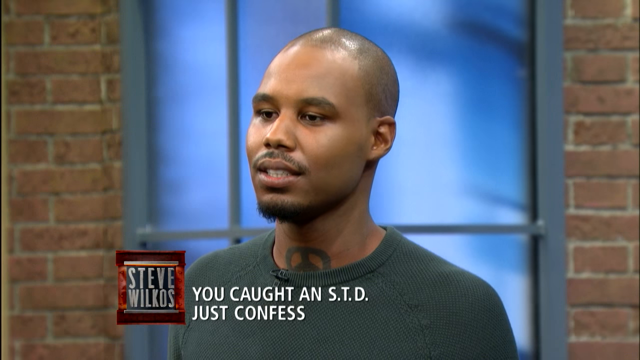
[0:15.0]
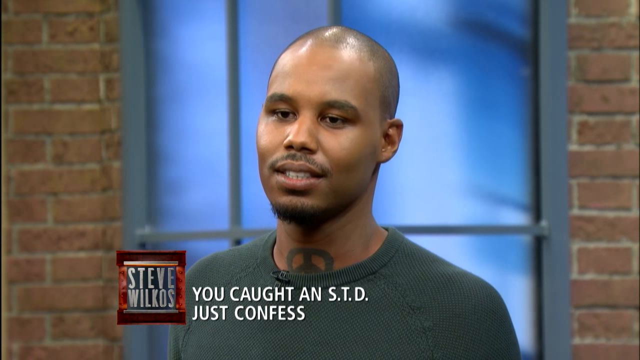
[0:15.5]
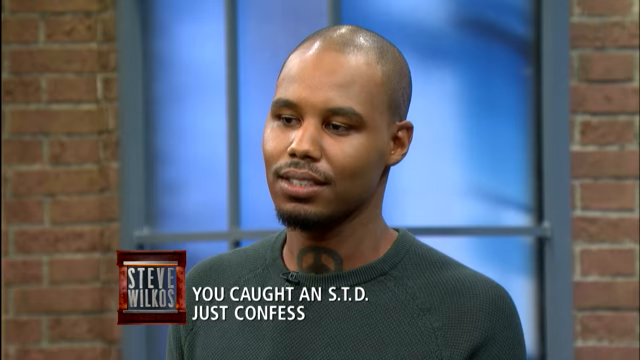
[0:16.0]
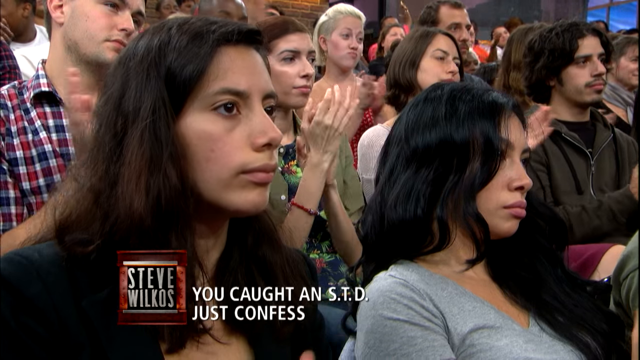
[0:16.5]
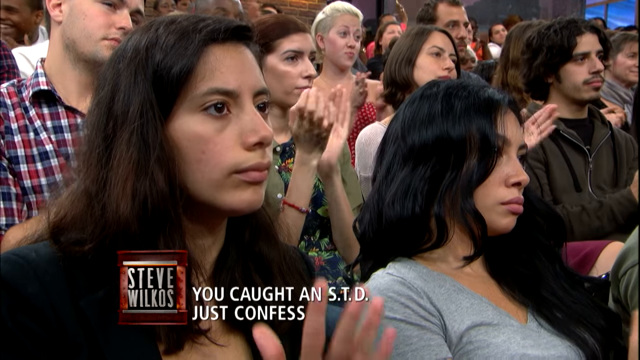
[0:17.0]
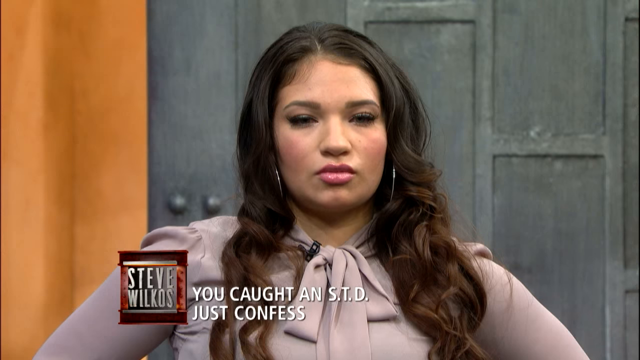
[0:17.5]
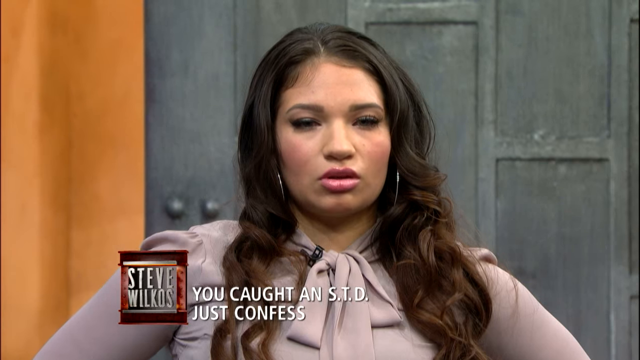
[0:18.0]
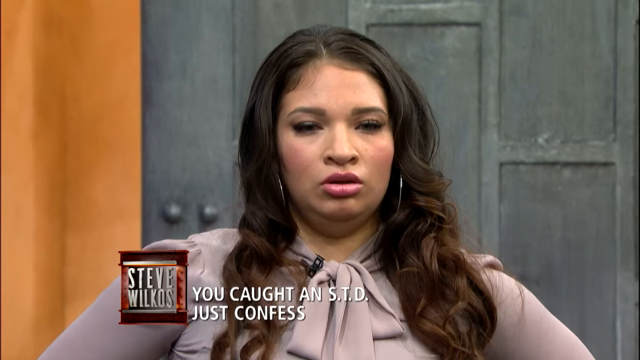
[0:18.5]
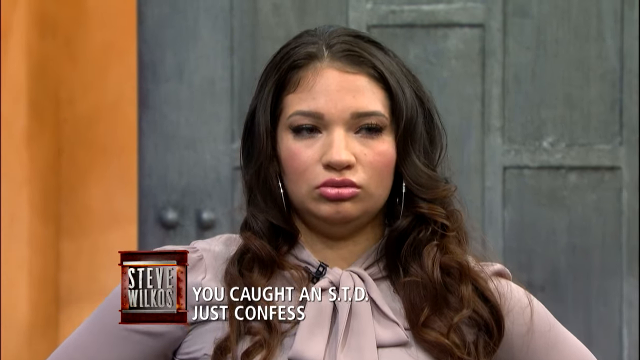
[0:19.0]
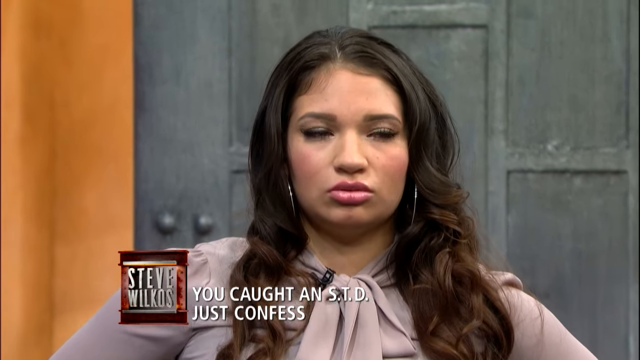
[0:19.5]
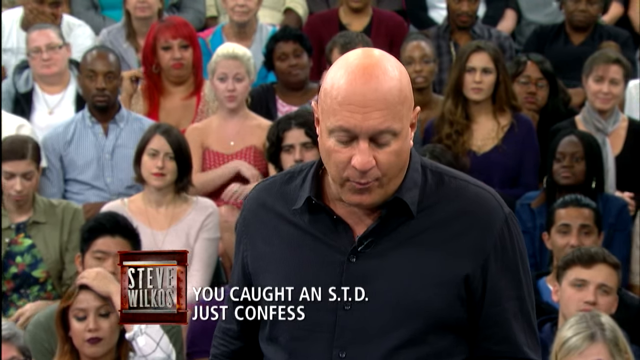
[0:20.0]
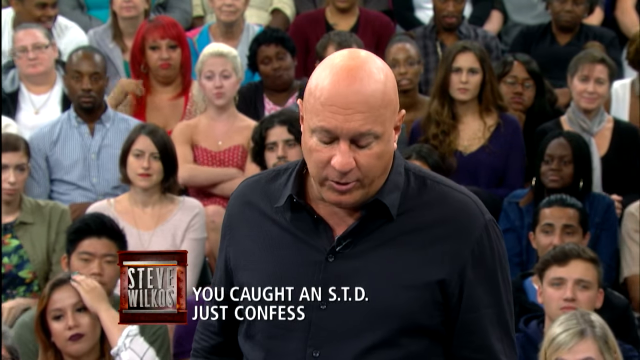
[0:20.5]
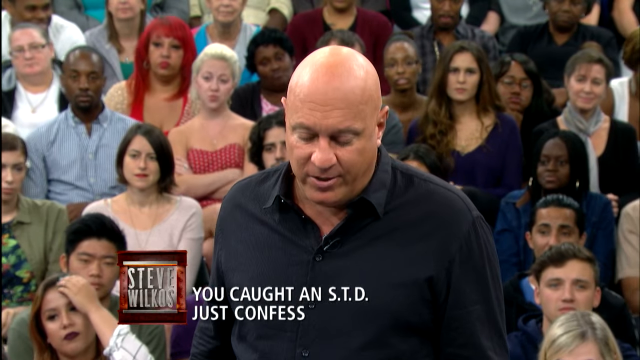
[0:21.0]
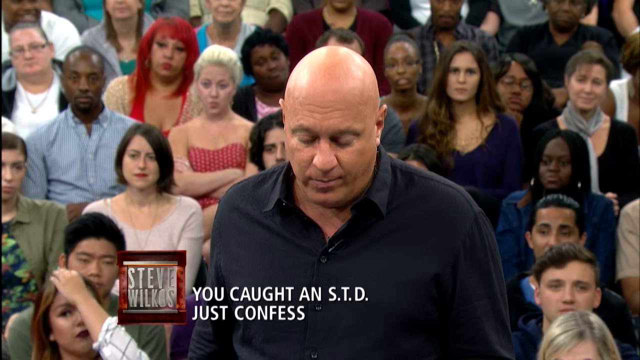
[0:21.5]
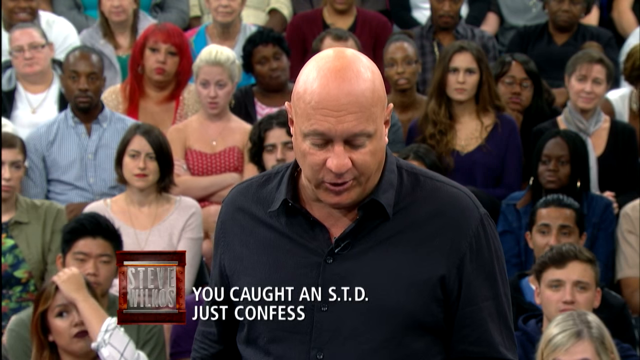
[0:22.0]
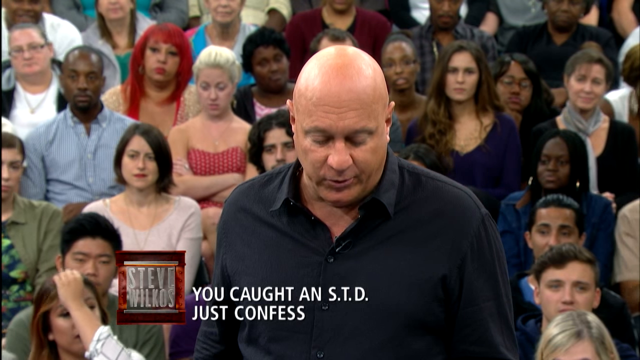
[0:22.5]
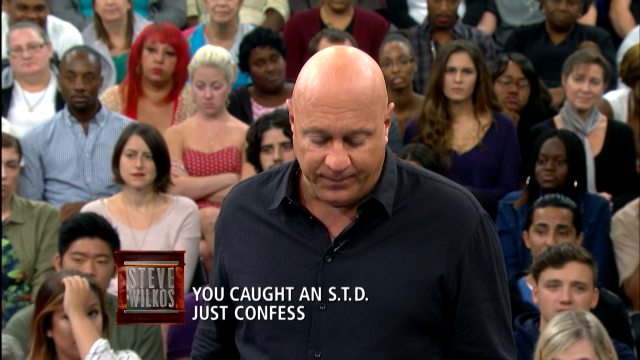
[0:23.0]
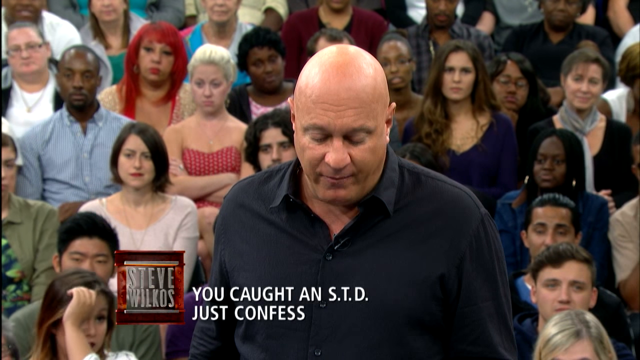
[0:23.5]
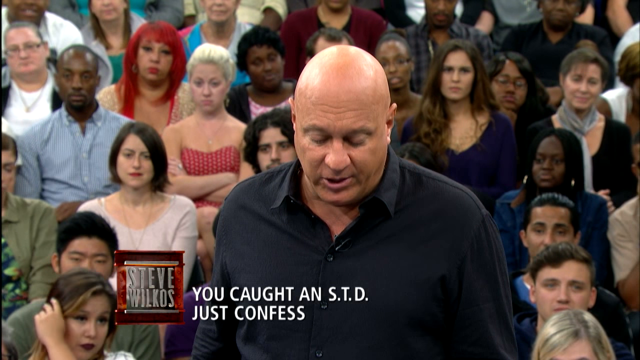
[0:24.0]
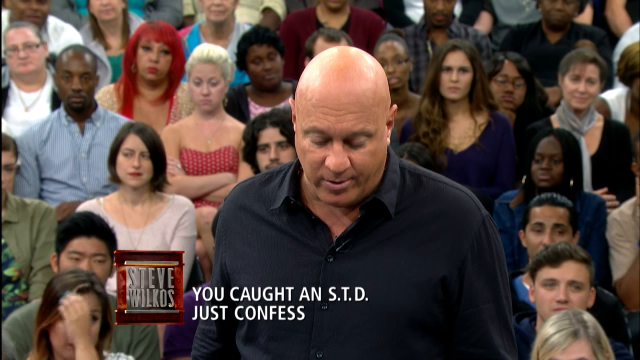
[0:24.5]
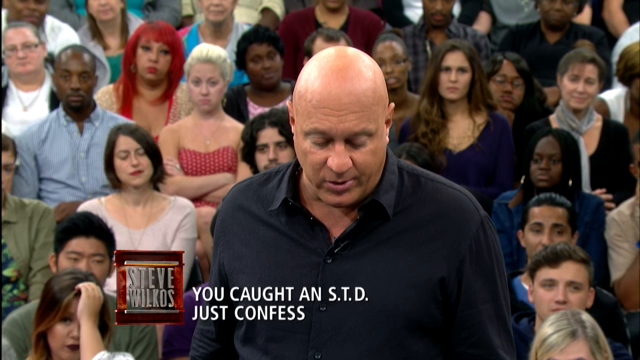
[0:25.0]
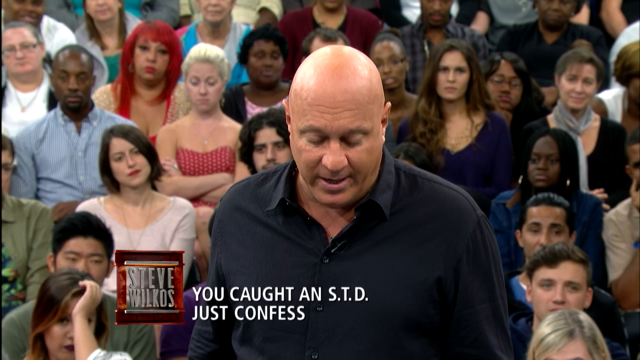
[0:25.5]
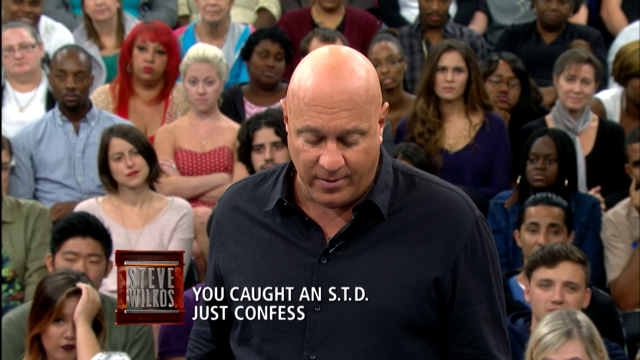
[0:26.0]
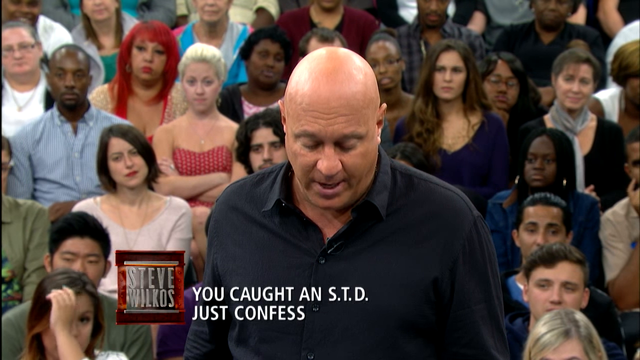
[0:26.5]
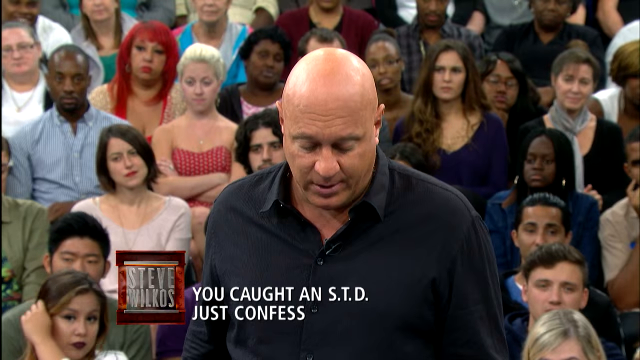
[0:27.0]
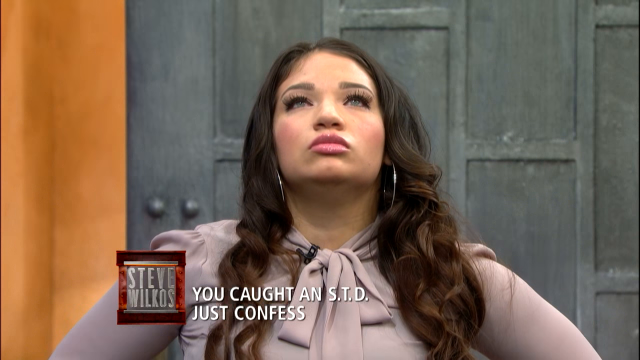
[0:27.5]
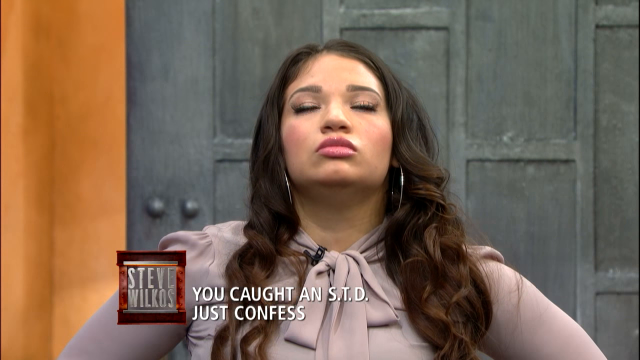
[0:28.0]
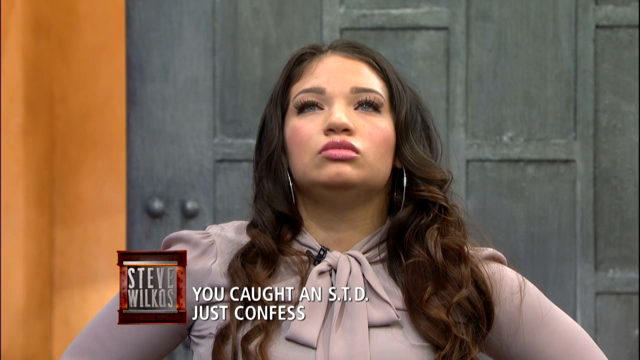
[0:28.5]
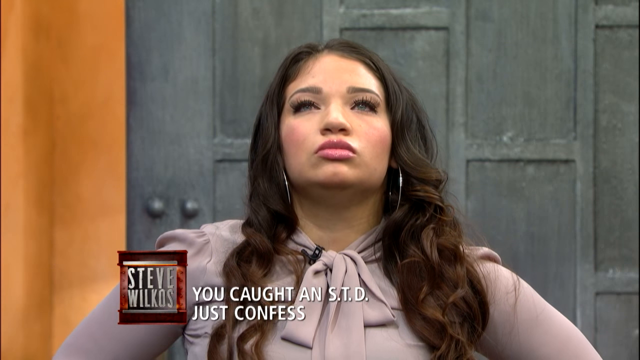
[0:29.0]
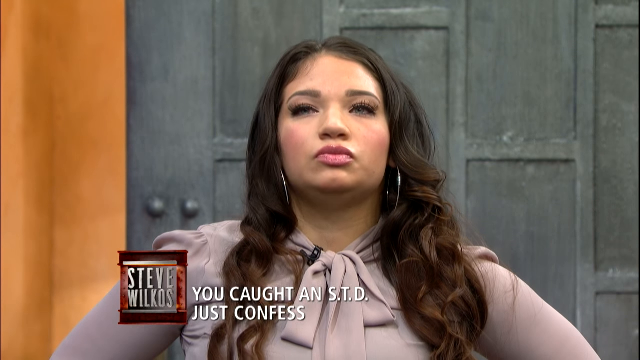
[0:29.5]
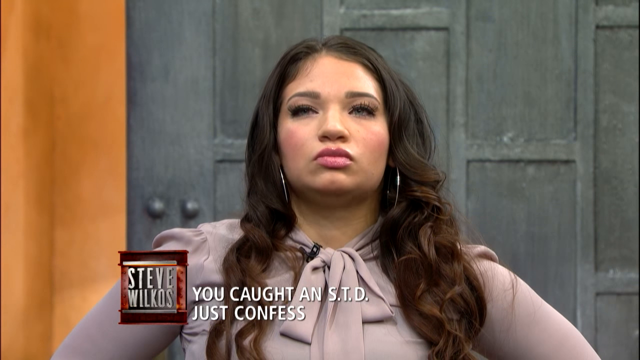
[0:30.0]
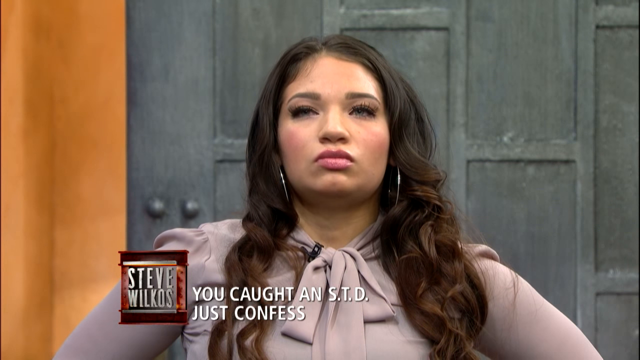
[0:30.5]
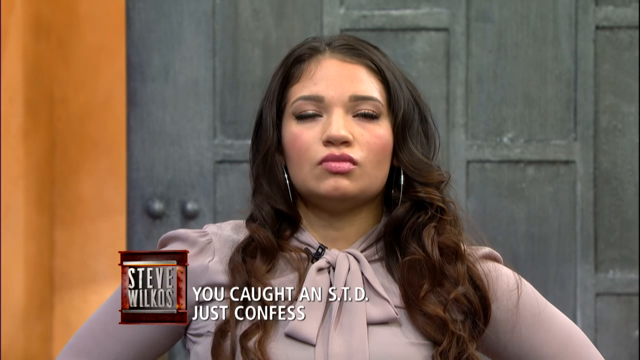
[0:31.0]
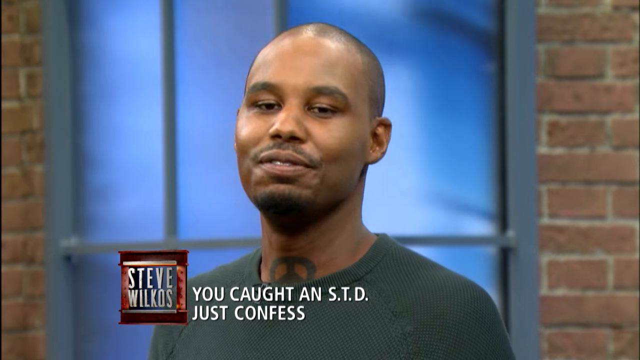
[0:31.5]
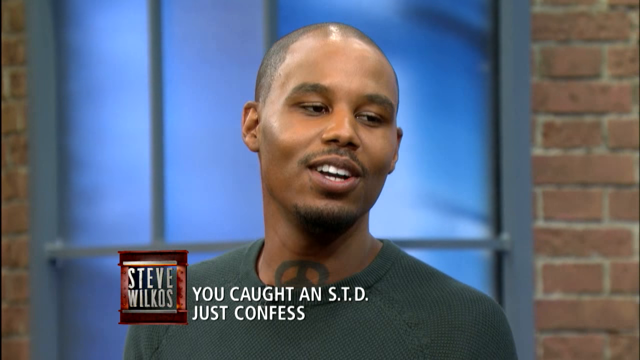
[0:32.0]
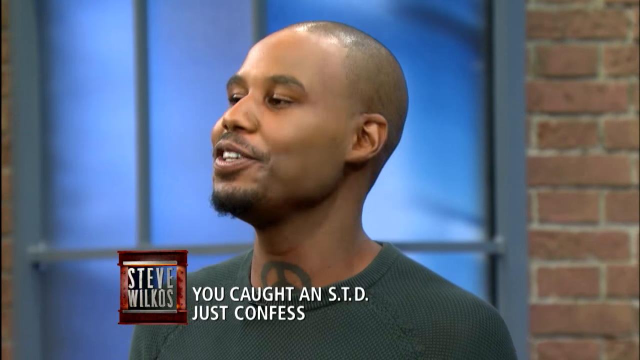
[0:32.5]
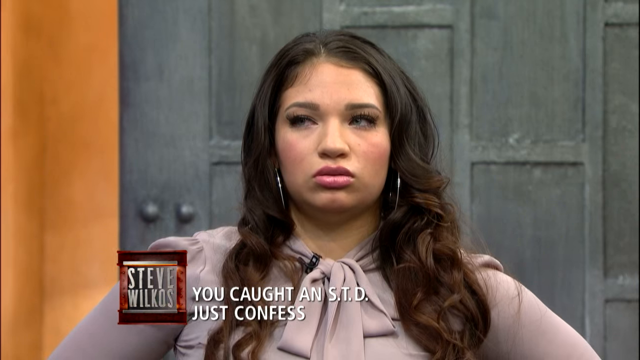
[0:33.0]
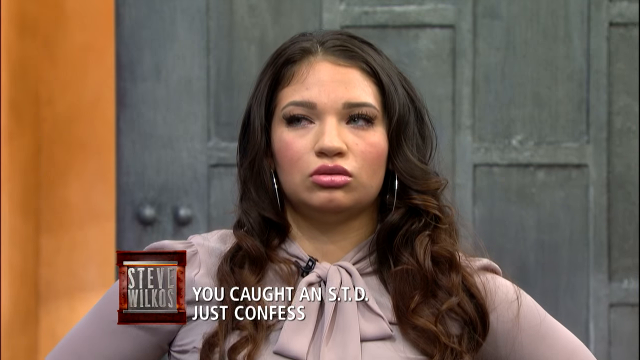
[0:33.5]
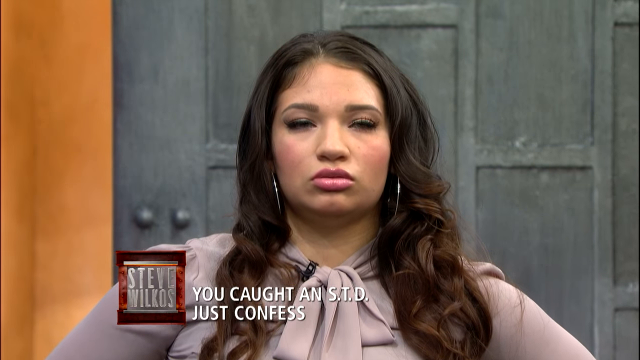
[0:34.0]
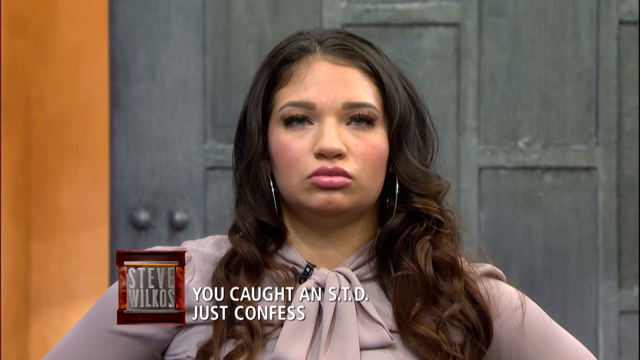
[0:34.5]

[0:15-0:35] The younger man has a mustache and beard and a peace sign tattoo at the base of his neck. He wears what looks like a dark green sweatshirt and is standing in front of what looks like a brick wall with a window in the middle of it. The video quickly switches to a close-up of audience members reacting after he speaks; they are clapping. It then cuts back to the woman with brown hair, whose nostrils flare as she holds back tears. Next comes the TV host, again reading entirely from a card out of the viewer's sight. The audience behind him now looks a bit more confused and annoyed, and one woman has her arms crossed. The video switches back to the woman, who is looking up with a serious expression, then to the young man, who looks like he is smiling as he talks, while each cut back to the woman shows her face still very serious and upset.